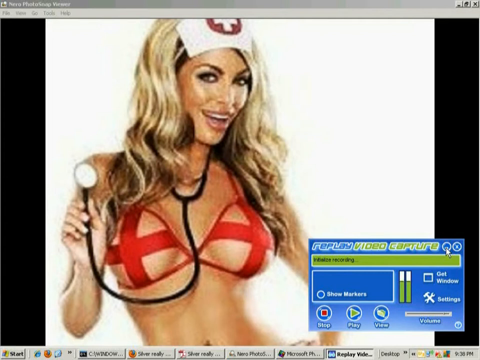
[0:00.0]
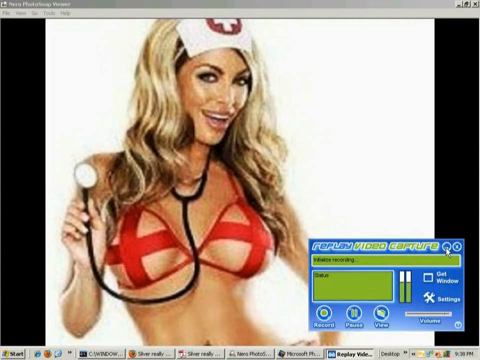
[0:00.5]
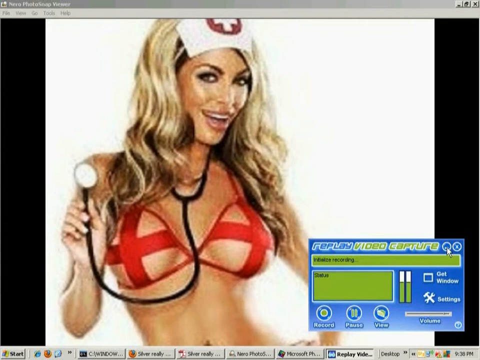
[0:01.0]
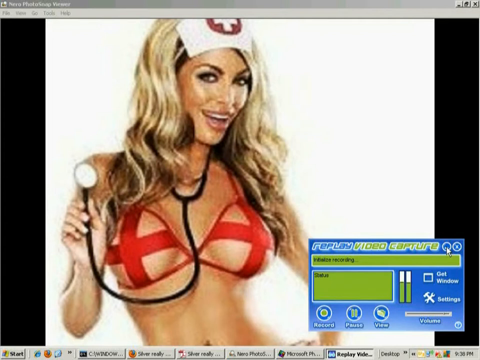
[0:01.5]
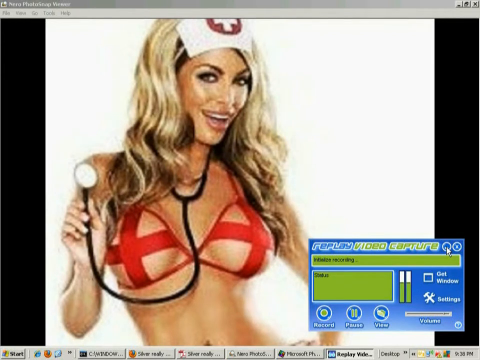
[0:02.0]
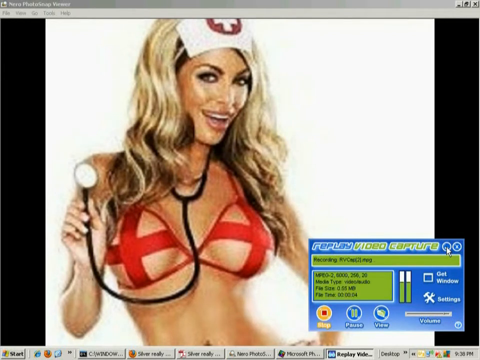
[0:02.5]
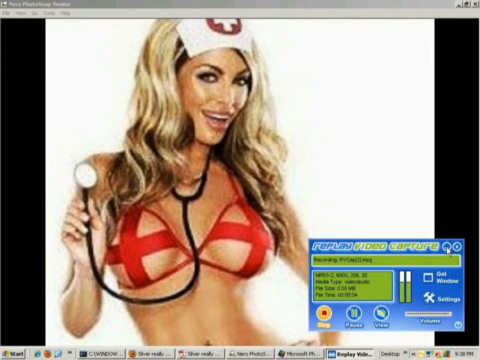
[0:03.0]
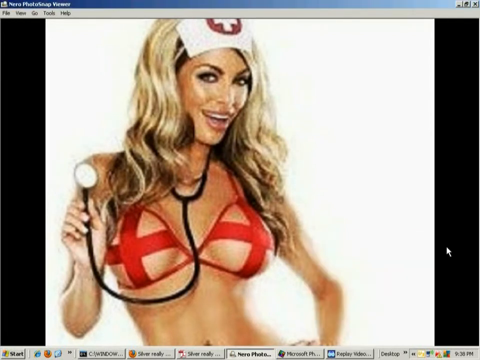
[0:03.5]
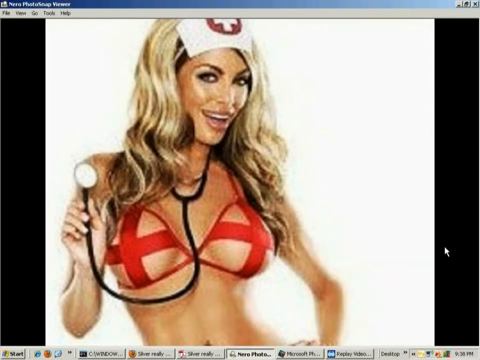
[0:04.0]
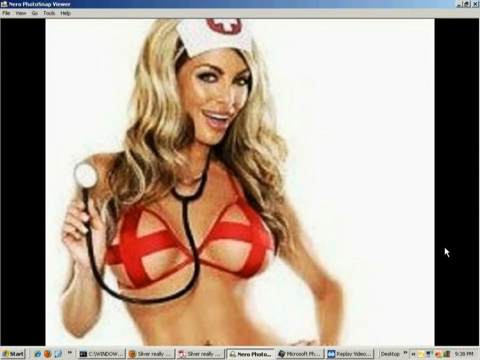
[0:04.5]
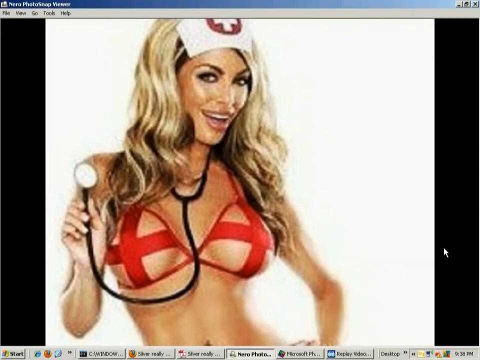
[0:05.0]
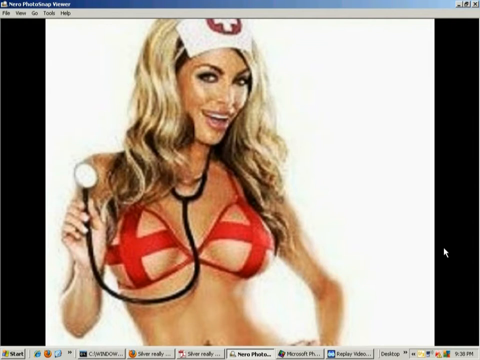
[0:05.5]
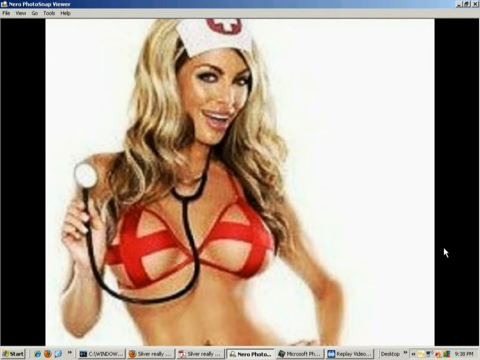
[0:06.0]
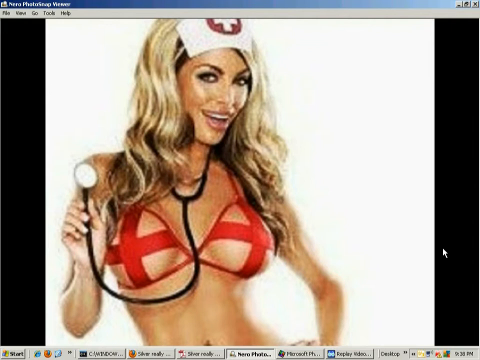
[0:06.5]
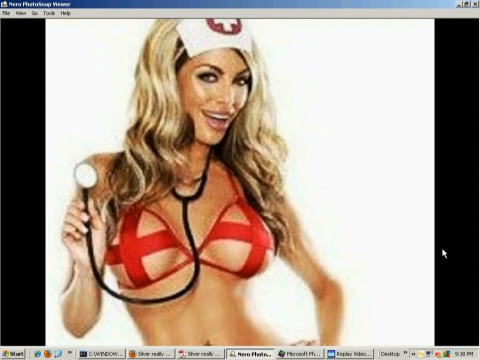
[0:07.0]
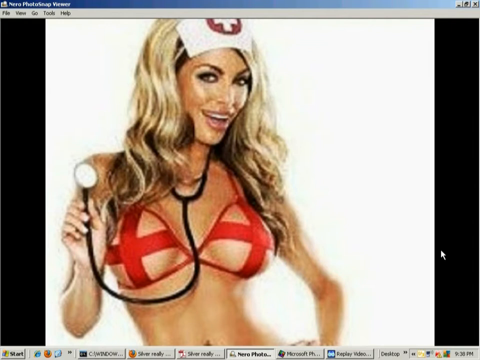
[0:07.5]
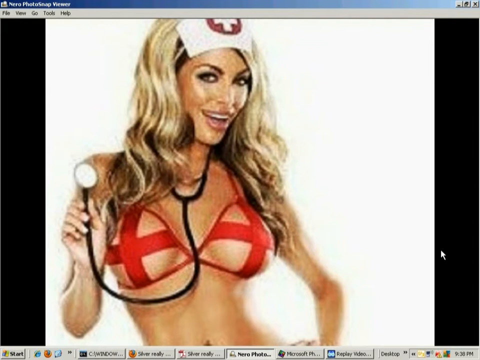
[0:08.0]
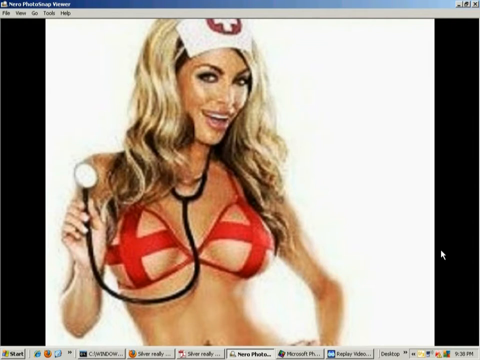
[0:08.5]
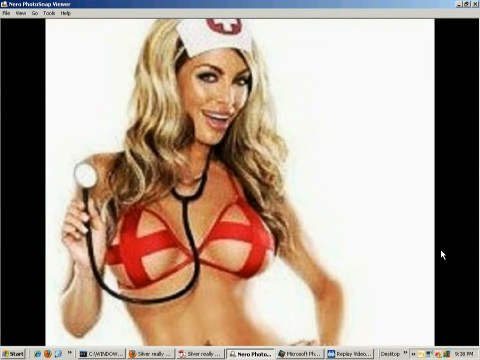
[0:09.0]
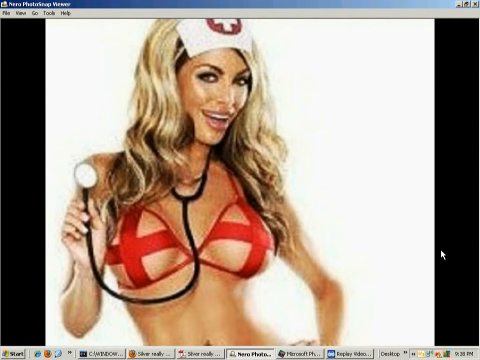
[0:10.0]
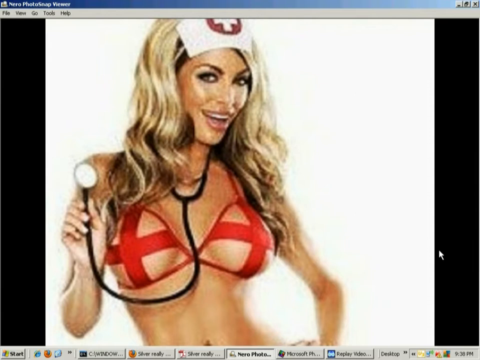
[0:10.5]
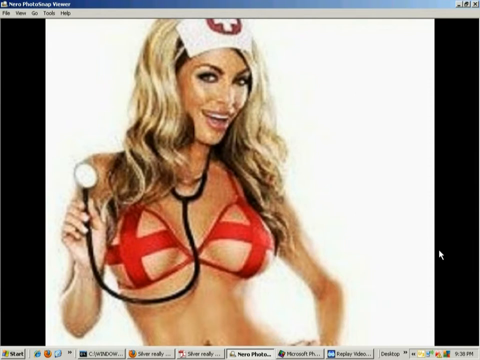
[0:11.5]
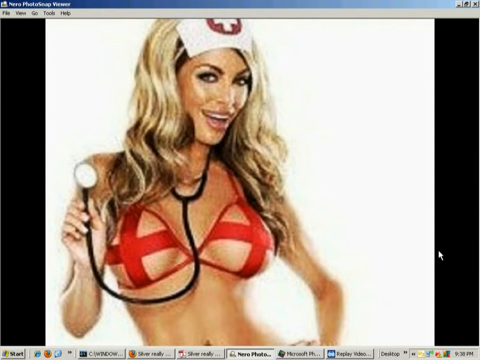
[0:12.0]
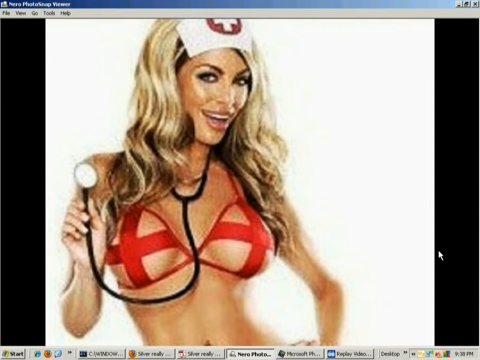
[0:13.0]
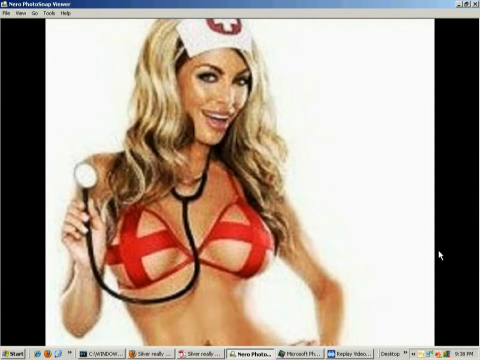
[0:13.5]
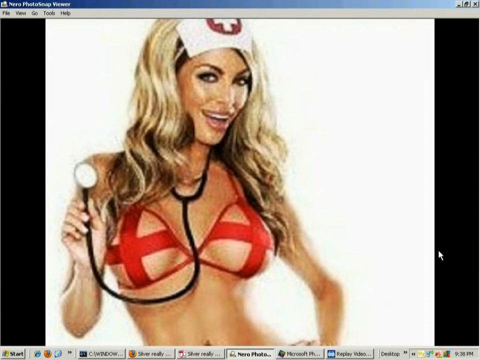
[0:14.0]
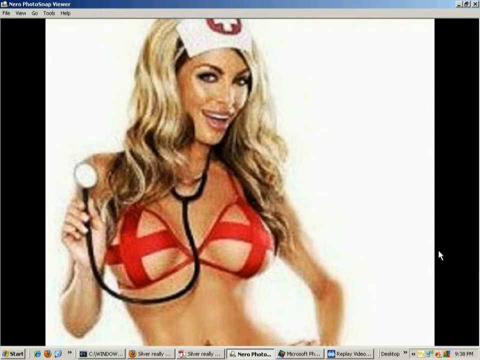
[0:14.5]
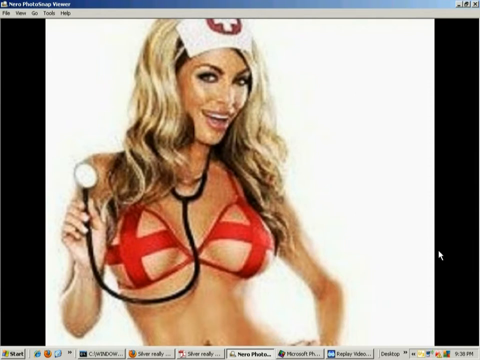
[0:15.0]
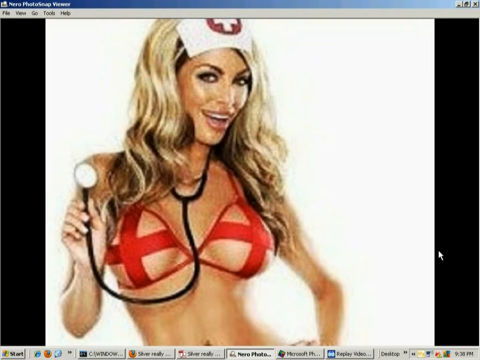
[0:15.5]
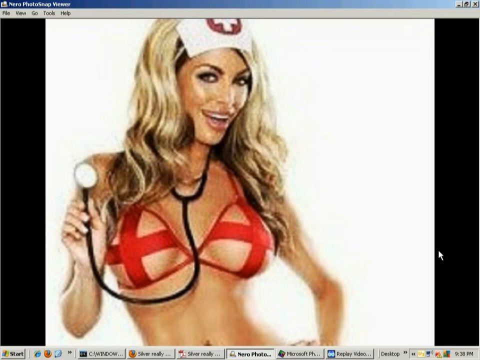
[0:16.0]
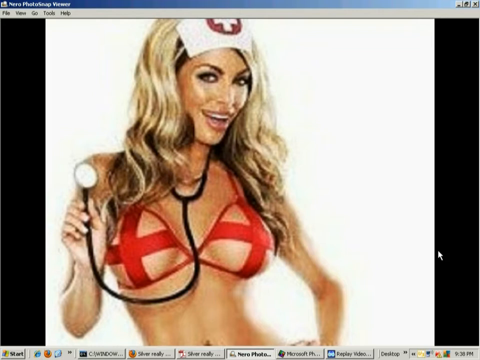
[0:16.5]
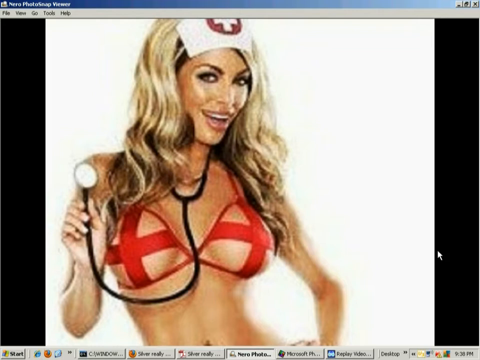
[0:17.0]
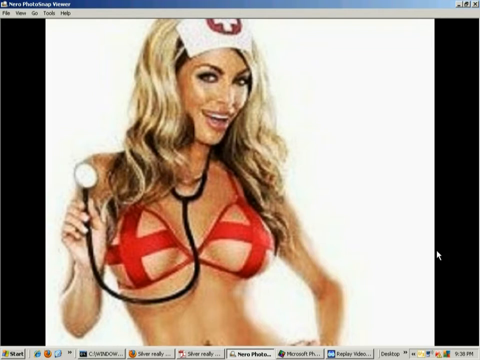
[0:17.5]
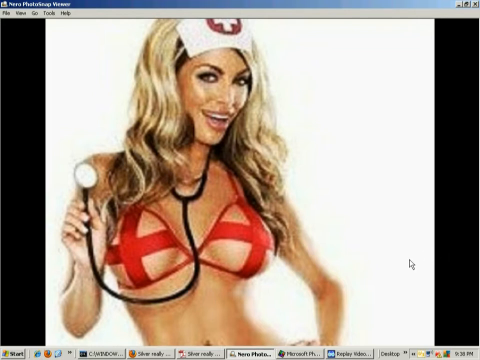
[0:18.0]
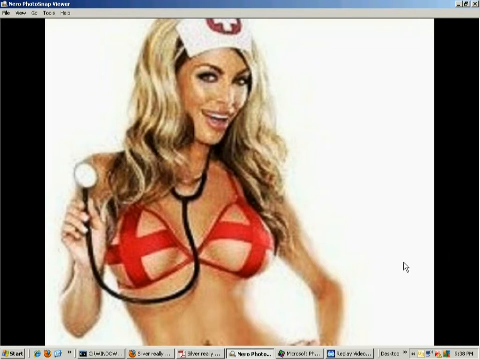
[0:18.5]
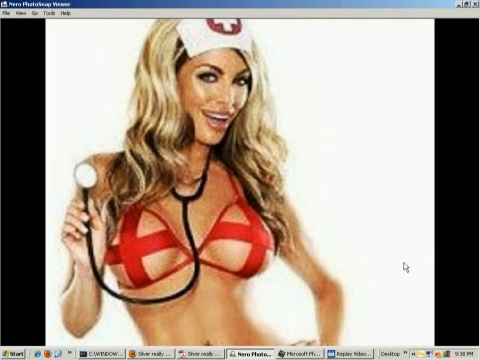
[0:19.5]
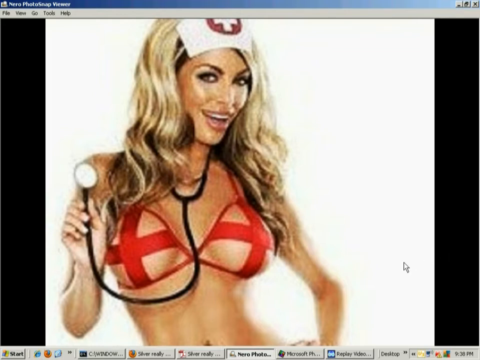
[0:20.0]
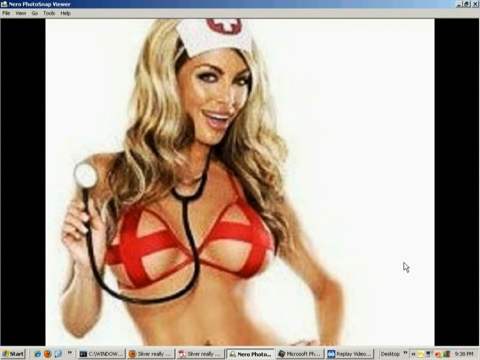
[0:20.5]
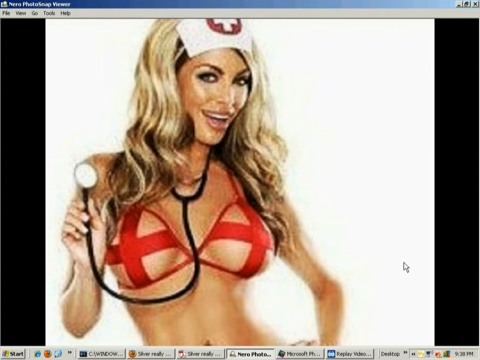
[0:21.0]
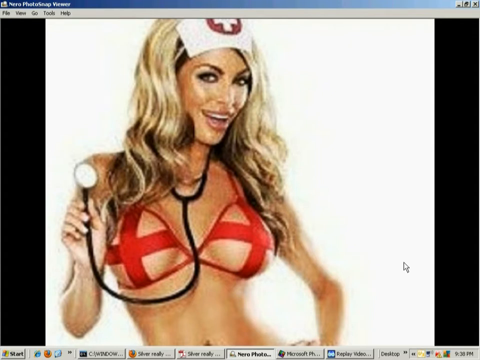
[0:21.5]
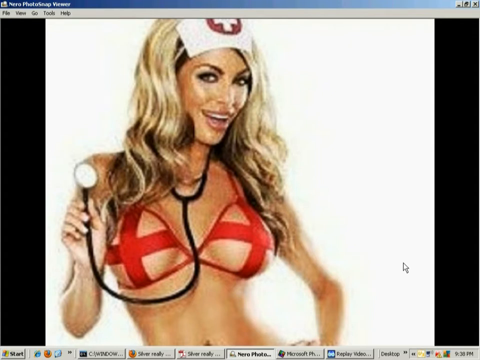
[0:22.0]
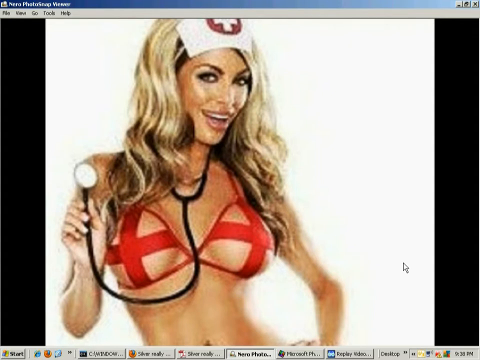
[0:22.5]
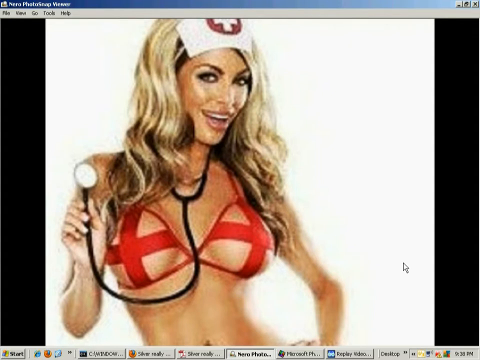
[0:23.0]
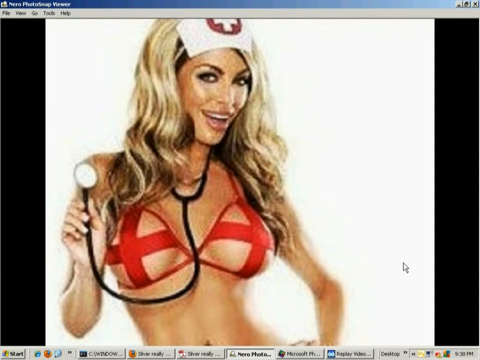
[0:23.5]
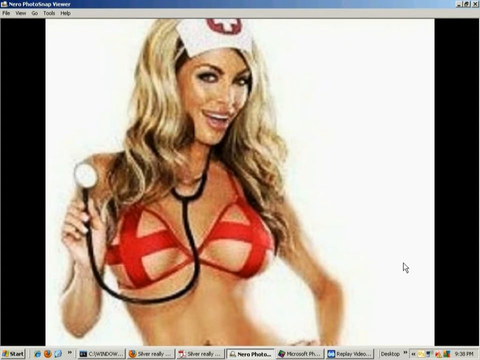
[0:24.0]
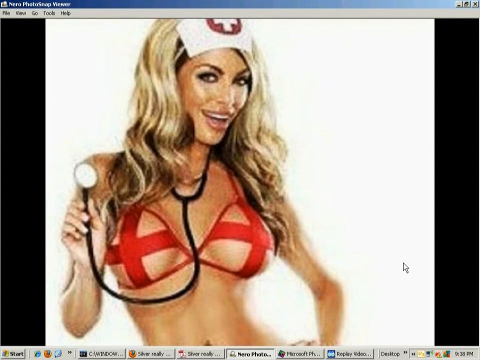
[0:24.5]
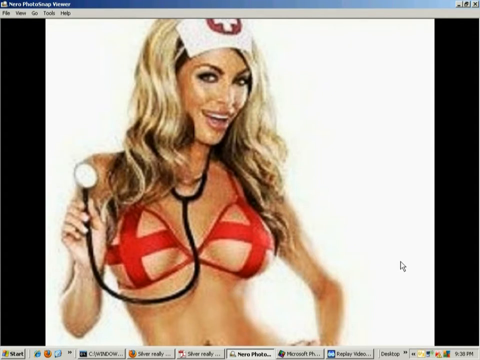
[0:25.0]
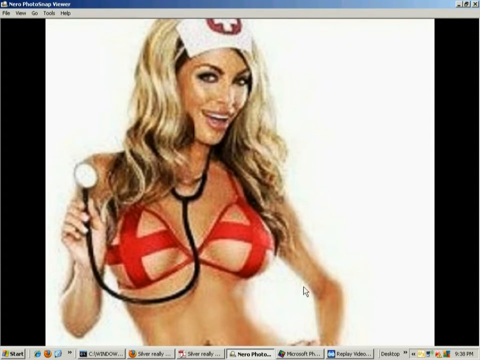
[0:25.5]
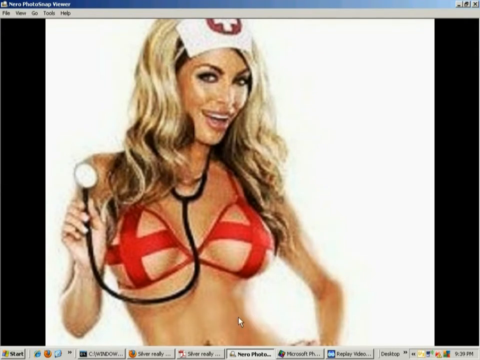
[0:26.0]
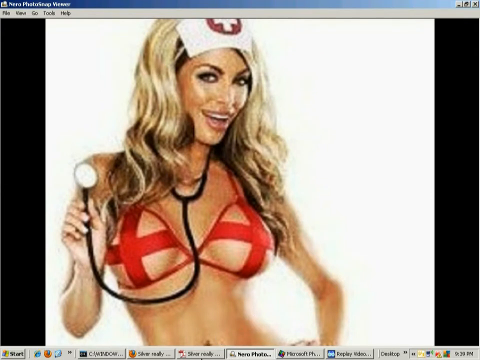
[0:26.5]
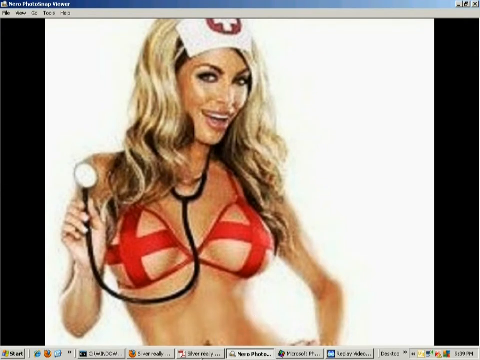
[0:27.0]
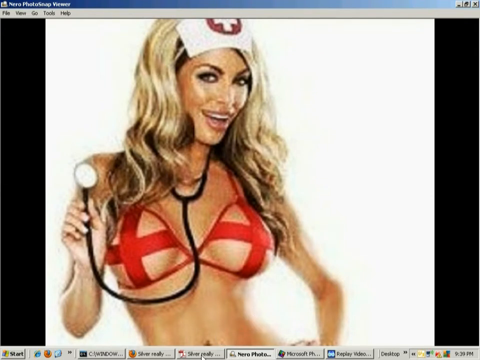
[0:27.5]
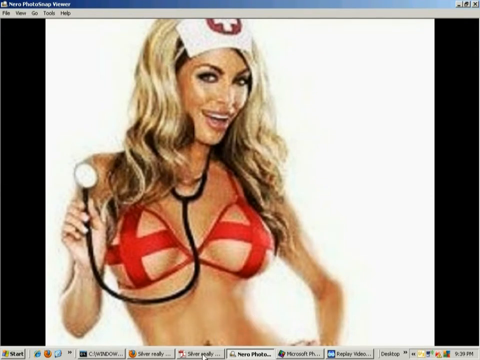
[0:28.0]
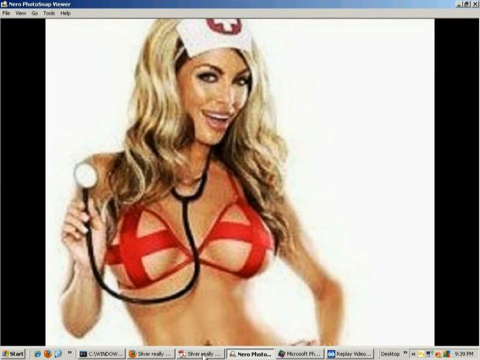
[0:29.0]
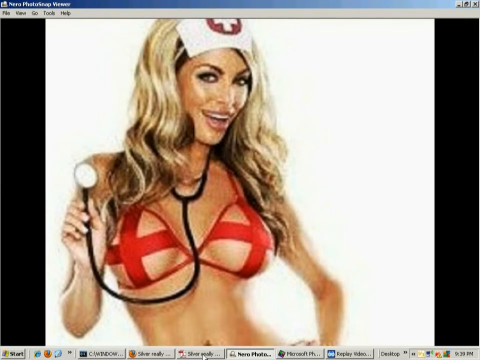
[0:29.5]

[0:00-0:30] The video opens on a half-naked nurse facing the viewer. She wears a bra that looks like the kind used by adult entertainment performers and a headband of the kind nurses wear, and she holds the tool doctors use to listen to the heartbeat and breathing. She is white and attractive. At the top left of the screen the text reads "Nero Photoshop Viewer", and the look of the computer screen suggests a very old computer, possibly running Windows 7. At the bottom right an app called "Replay Video Capture" is open, with Stop, Play and many other settings. Along the bottom are Firefox, Microsoft Photoshop, Command Prompt and the Windows button, which also point to a very old version of Windows. The person at the controls moves the mouse cursor around, up and down. At the top, a menu reads "File, View, Go, Tools, and Help".